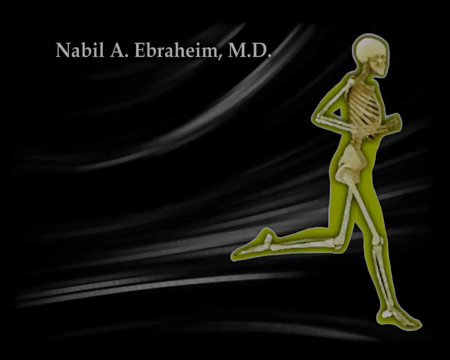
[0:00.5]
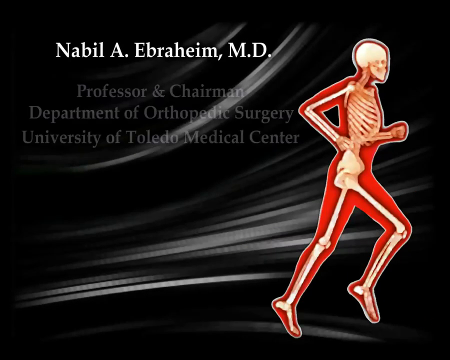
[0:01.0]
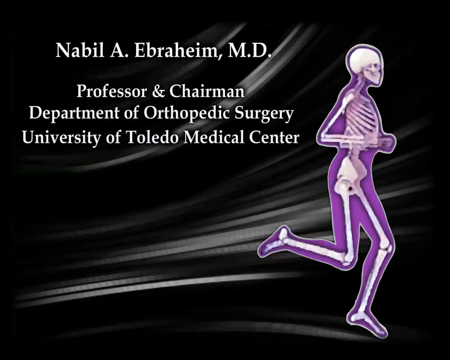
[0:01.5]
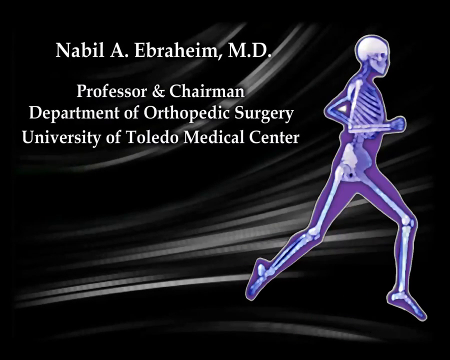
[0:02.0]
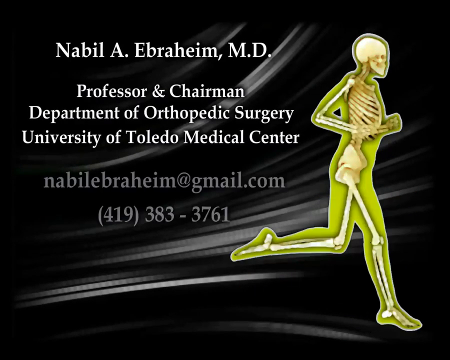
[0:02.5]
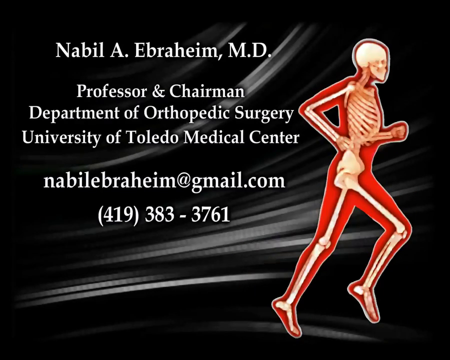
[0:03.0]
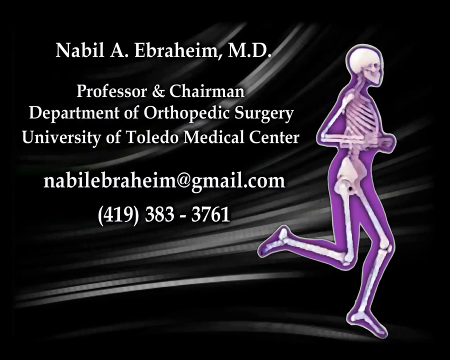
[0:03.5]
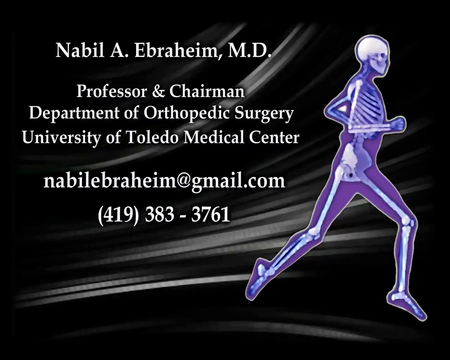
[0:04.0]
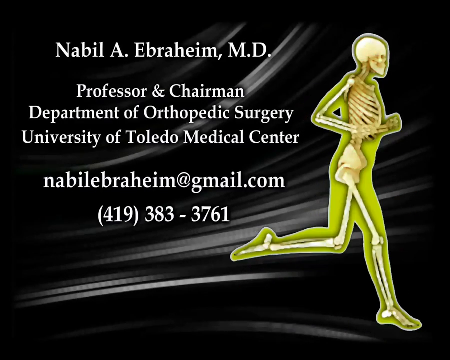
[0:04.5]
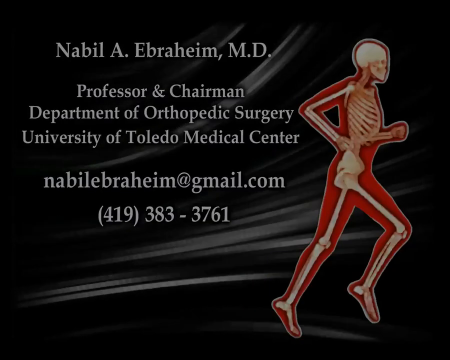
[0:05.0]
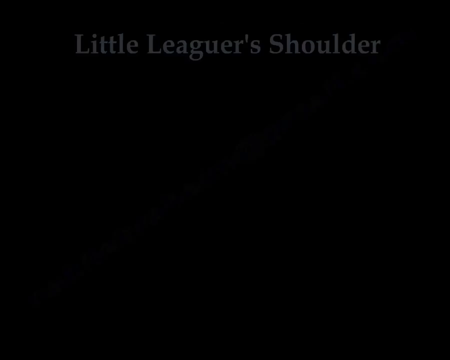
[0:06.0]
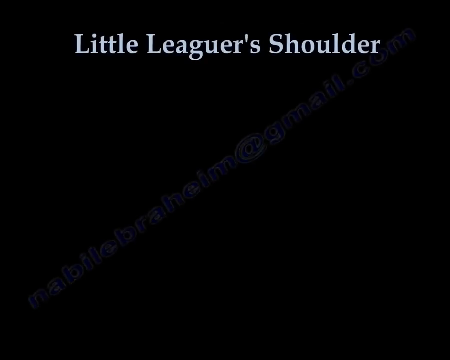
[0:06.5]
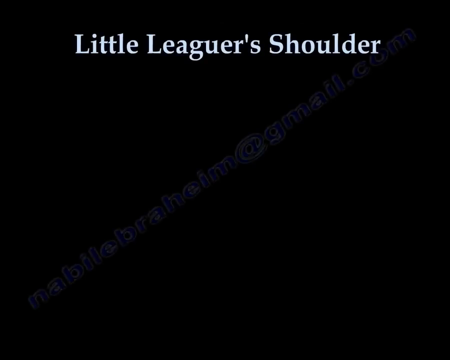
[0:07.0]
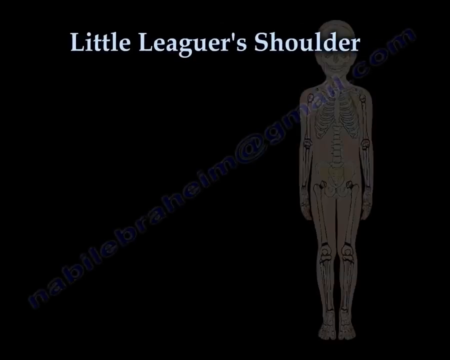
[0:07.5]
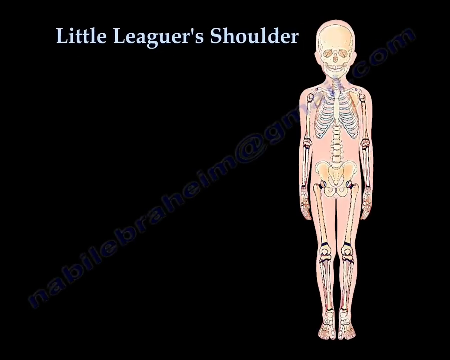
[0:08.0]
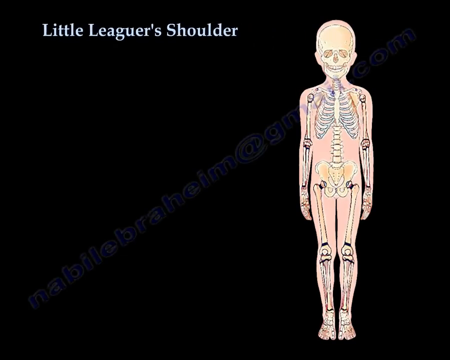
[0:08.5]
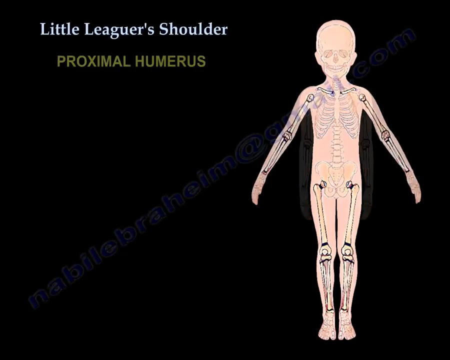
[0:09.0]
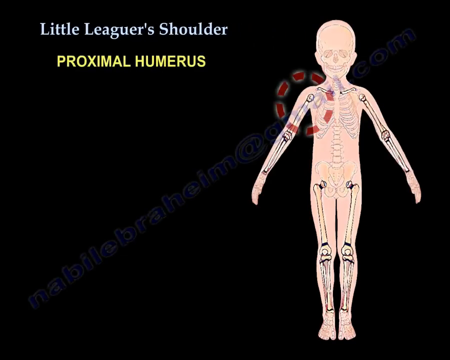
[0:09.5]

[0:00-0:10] The video begins on a black screen with several horizontal white lines in the background, some of them swooping upward. On the right-hand side of the screen is an animated skeleton highlighted in blue. The figure appears to be running, and as it runs it changes colour from blue to pink to green and yellow. White text on the screen reads "Nabil A. Abraheim, MD", and below that "Professor and Chairman, Department of Orthopedic Surgery, University of Toledo Medical Center." Below that the doctor's address is given, along with a phone number, "419-383-3761." The screen then goes black and a new screen emerges with "Little Leaguer's Shoulder" at the top. Another animated skeleton, with a pink body, appears on the right-hand side of the screen. Below the caption the text reads "proximal humerus", and as this is displayed the skeleton's arms extend outward and a red circle emerges to highlight an area of the body.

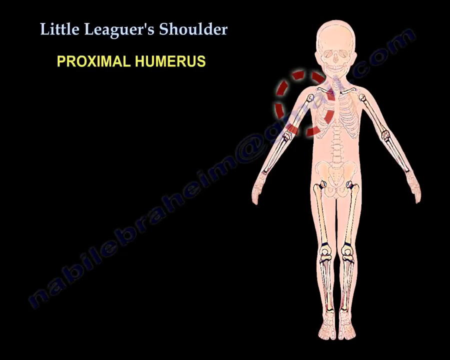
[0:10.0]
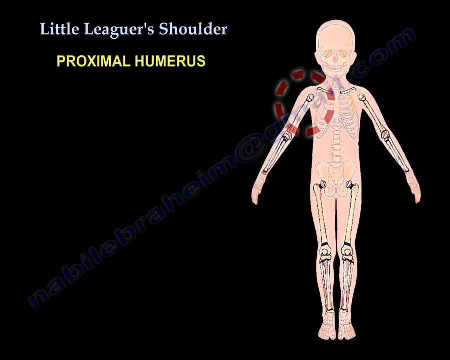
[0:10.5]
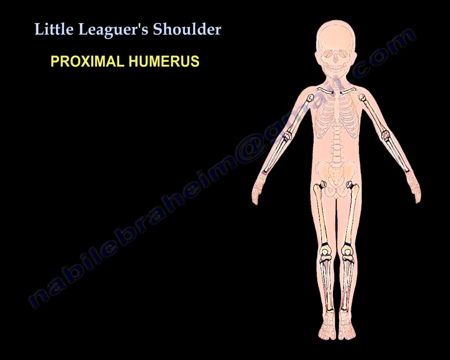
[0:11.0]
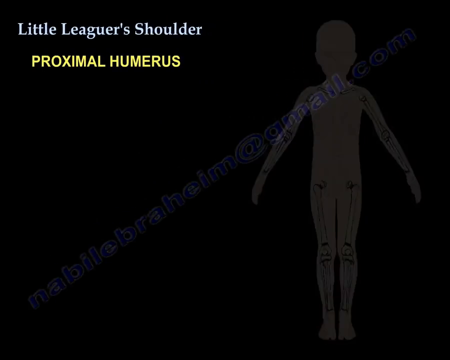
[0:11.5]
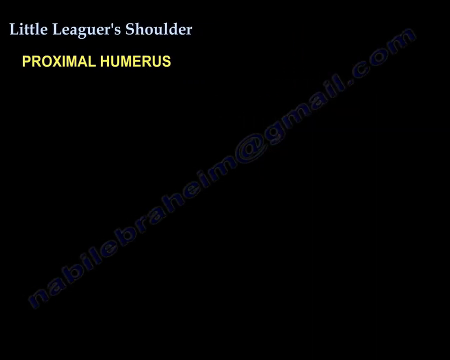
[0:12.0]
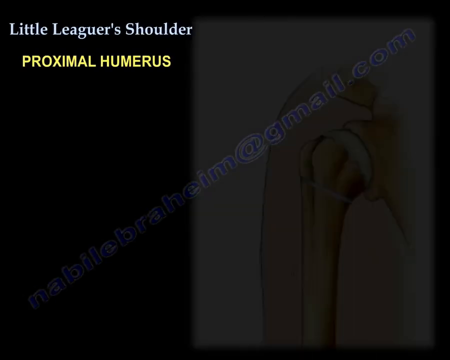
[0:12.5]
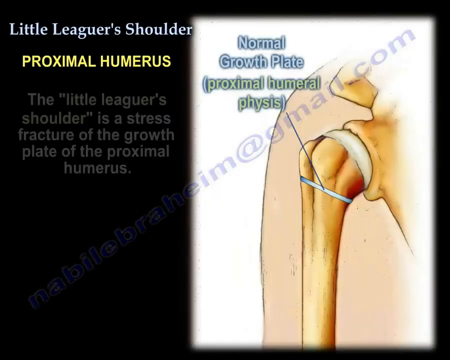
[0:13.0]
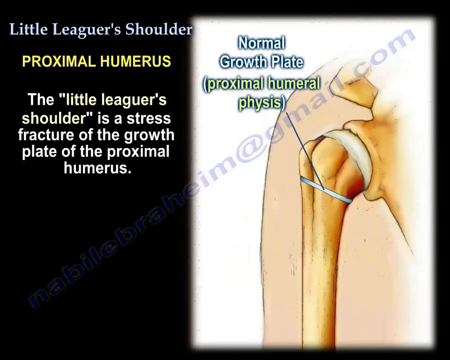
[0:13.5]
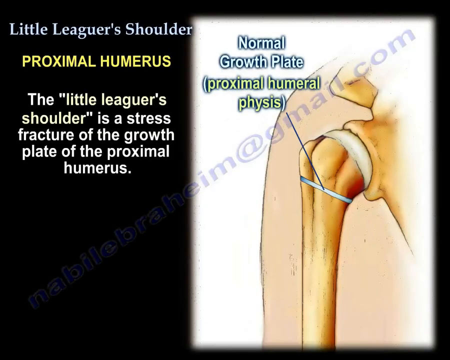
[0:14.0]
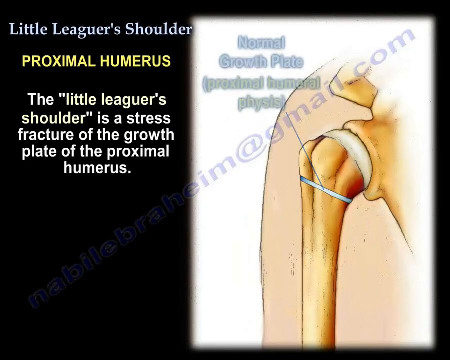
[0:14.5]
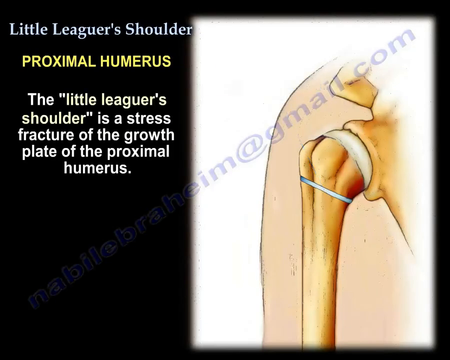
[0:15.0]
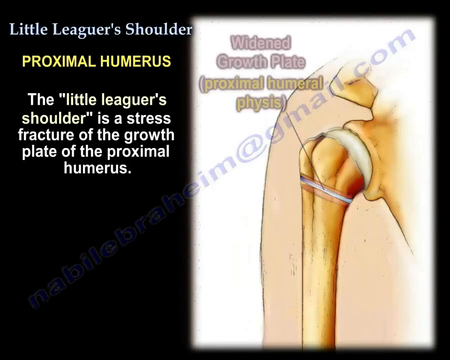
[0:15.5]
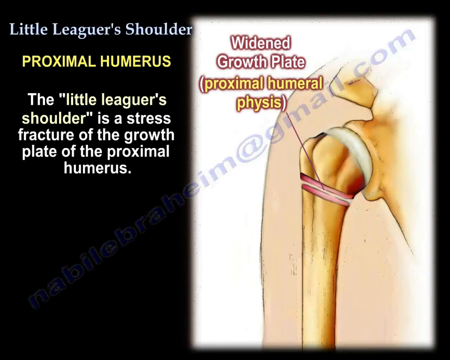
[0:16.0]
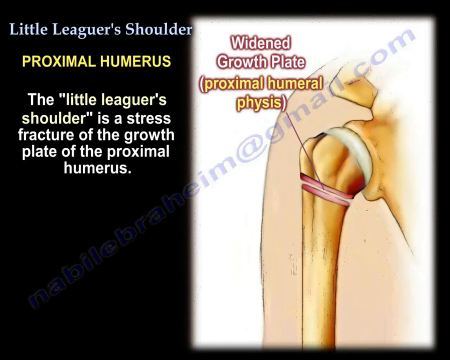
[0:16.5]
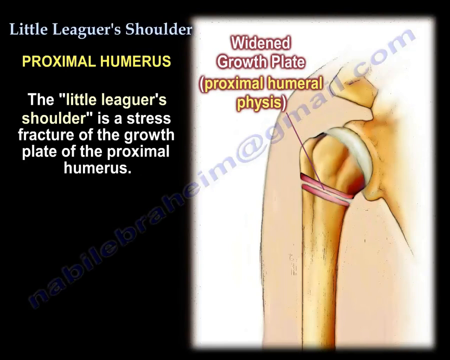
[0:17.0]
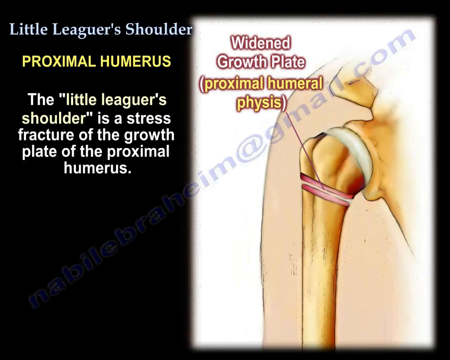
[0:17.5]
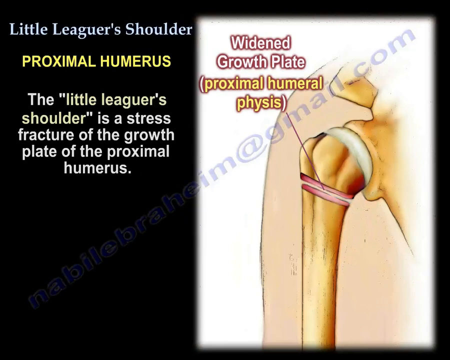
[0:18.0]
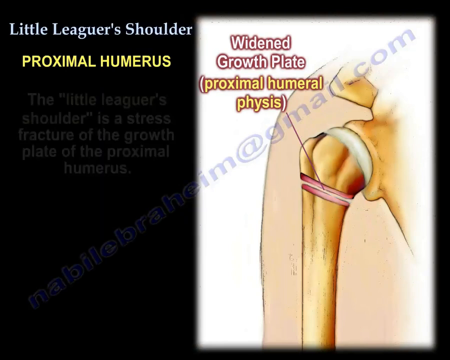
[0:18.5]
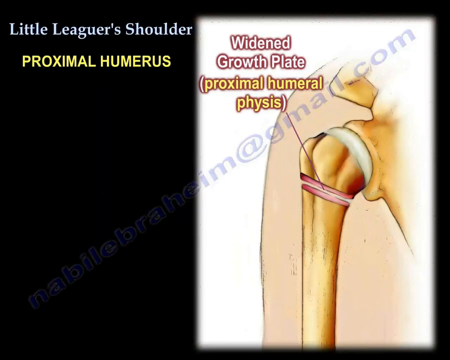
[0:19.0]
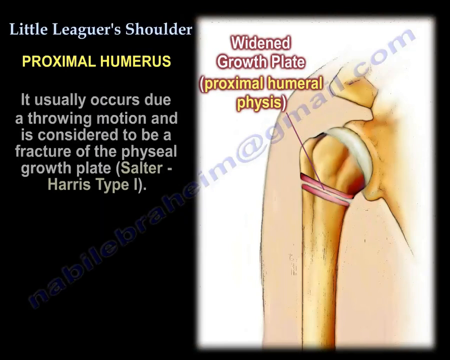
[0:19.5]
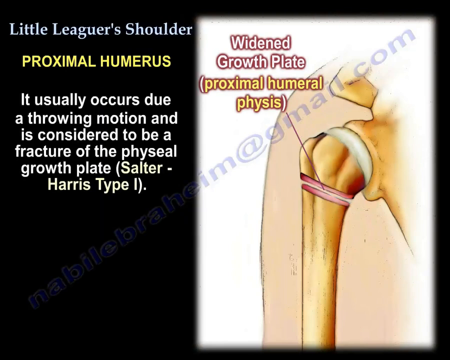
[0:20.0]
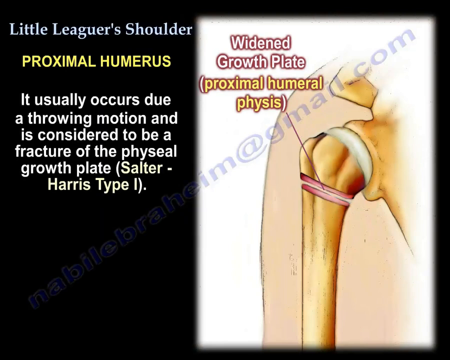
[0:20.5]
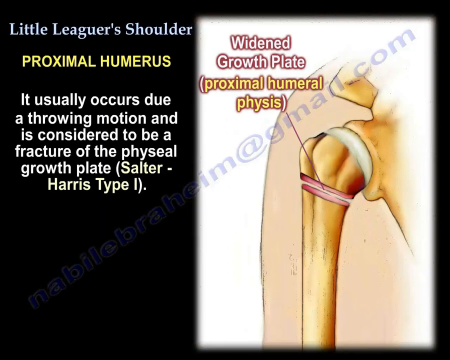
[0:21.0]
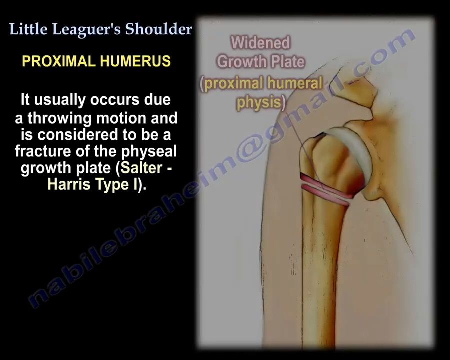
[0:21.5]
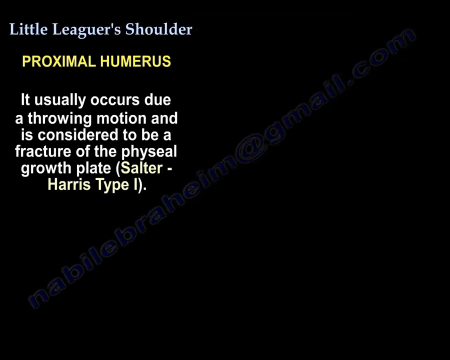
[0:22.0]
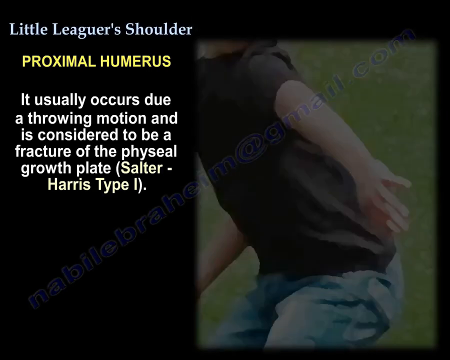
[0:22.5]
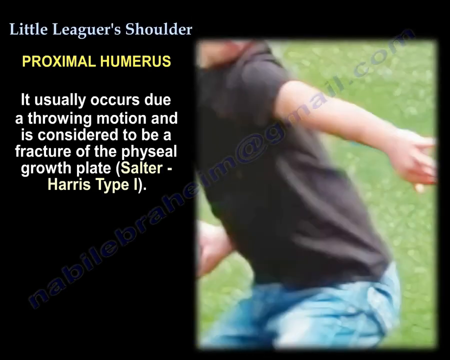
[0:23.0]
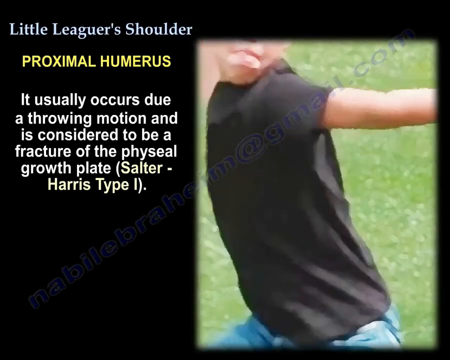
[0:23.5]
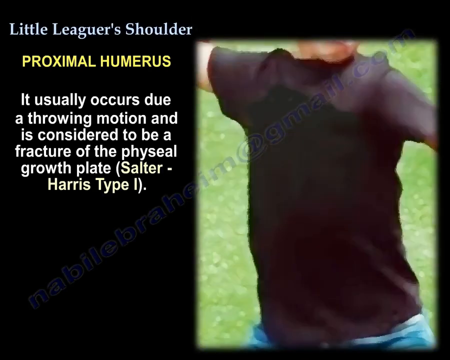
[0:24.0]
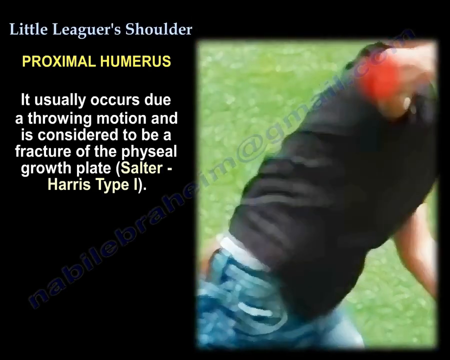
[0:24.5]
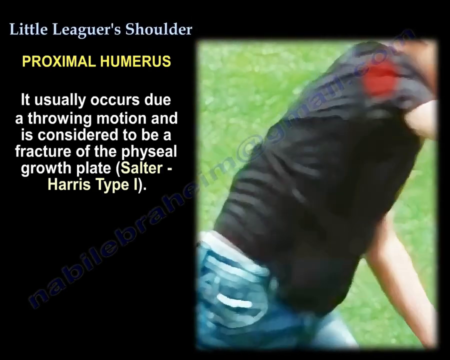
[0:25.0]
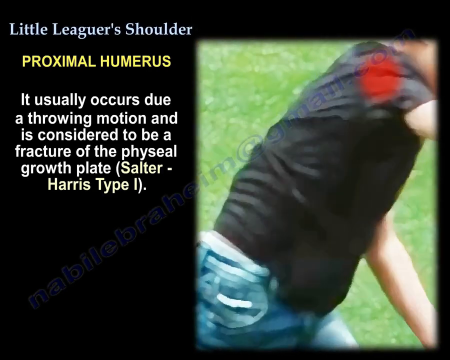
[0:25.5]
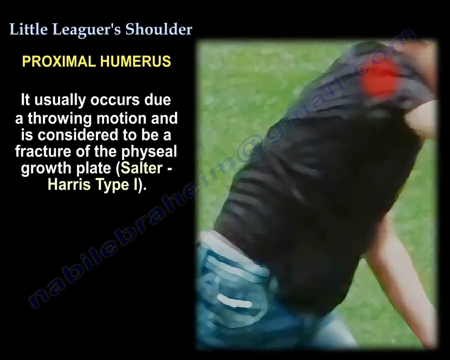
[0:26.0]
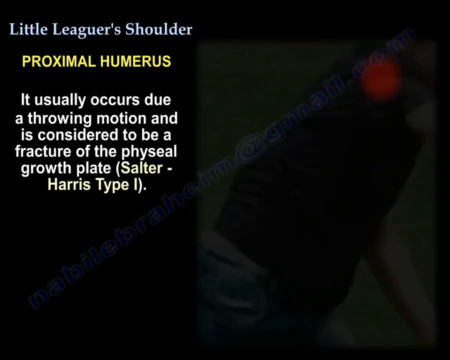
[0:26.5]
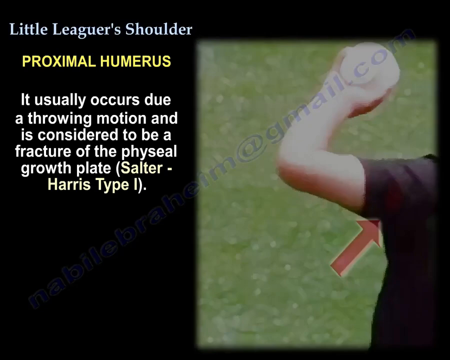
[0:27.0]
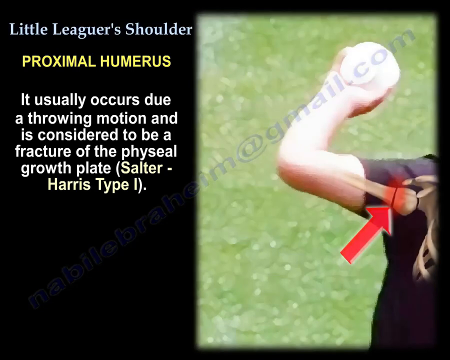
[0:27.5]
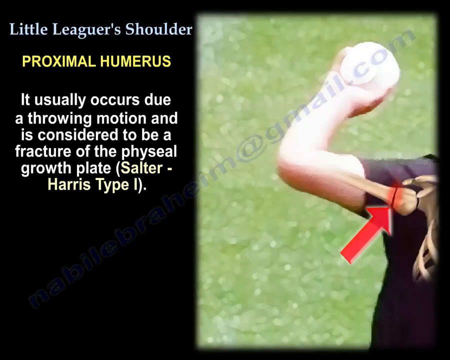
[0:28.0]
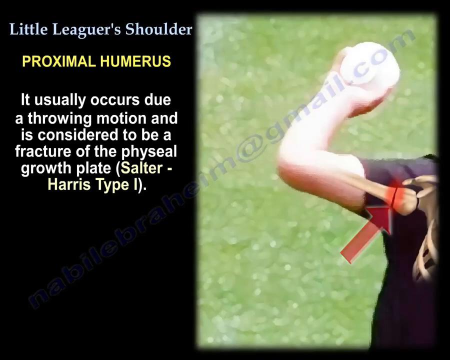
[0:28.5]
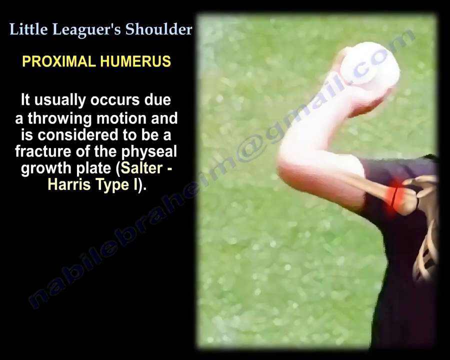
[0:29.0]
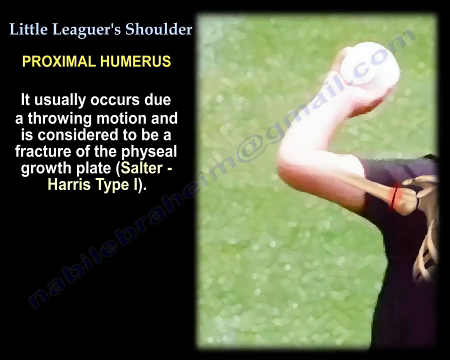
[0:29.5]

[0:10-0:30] On the right-hand side of the screen is an animated skeleton with a pink body, its arms slightly extended to each side, and a red circle centered over its right shoulder. On the left-hand side, white letters read "little leaguer shoulder", and below that, in yellow uppercase letters, "proximal humerus". The skeleton then leaves the page and an animated close-up diagram of the shoulder is displayed, showing the bones as well as the skin. On the left-hand side, below "proximal humerus", the text reads "the little leaguer shoulder is a stress fracture of the growth plate of the proximal humerus." Next to the graphic on the right-hand side, a label says "widened growth plate (proximal humerus physis)", with an arrow pointing to that section of the shoulder. The text then reads "it usually occurs due to a throwing motion and is considered to be a fracture of the physio growth plate." The close-up image of the shoulder goes away, and a slow-motion video shows a young man in jeans and a black t-shirt throwing a ball, with a red dot shown on his shoulder as he makes the motion. This goes away and another angle of the throw is shown as a still shot, where a red area again highlights the pain in the young boy's shoulder as he throws the baseball.